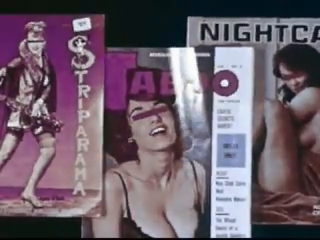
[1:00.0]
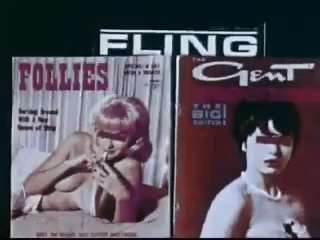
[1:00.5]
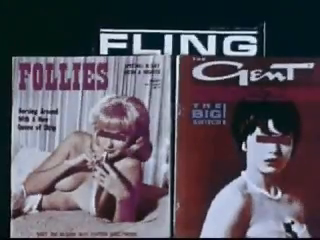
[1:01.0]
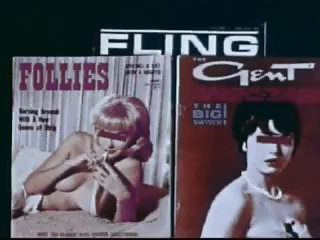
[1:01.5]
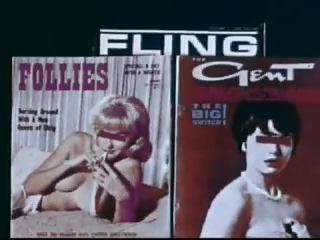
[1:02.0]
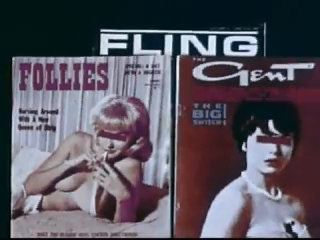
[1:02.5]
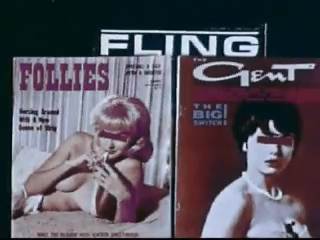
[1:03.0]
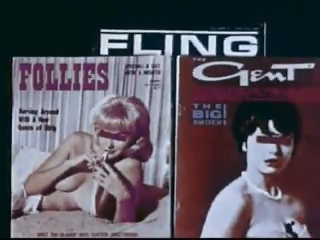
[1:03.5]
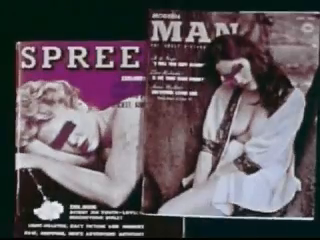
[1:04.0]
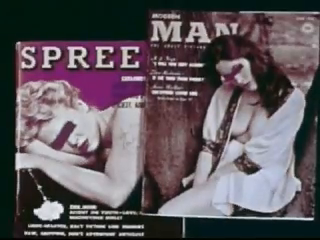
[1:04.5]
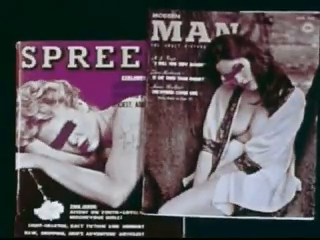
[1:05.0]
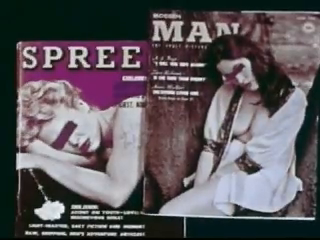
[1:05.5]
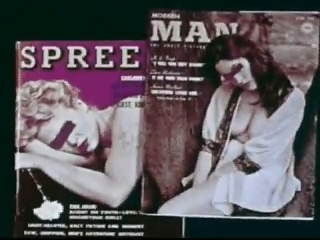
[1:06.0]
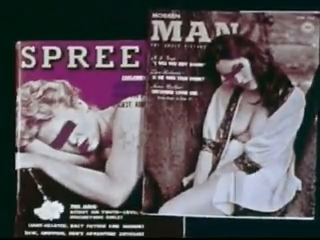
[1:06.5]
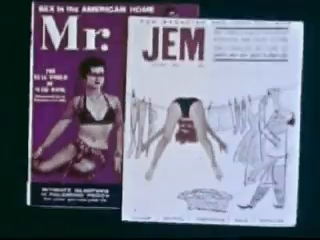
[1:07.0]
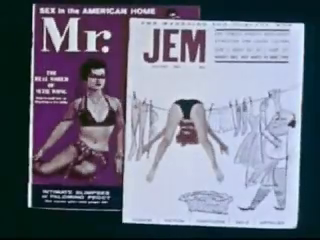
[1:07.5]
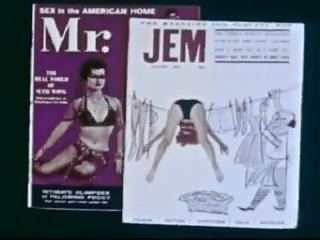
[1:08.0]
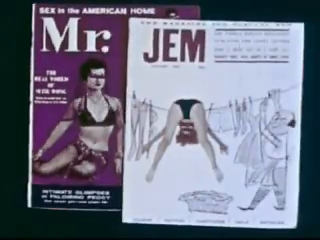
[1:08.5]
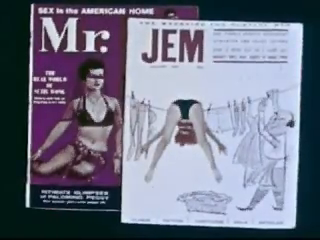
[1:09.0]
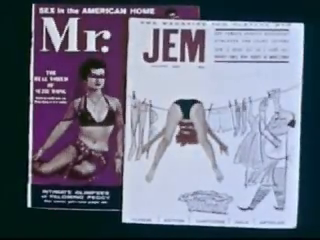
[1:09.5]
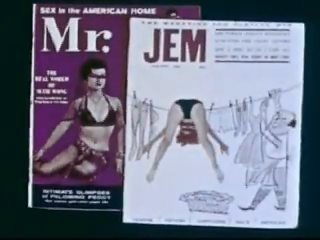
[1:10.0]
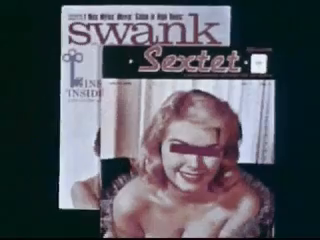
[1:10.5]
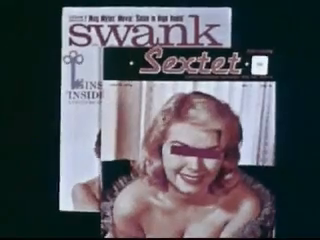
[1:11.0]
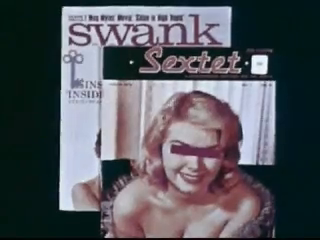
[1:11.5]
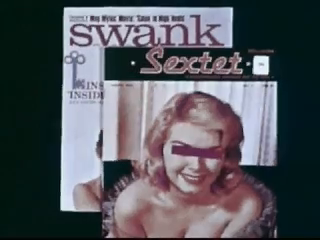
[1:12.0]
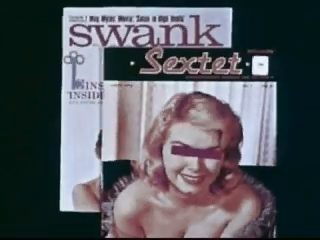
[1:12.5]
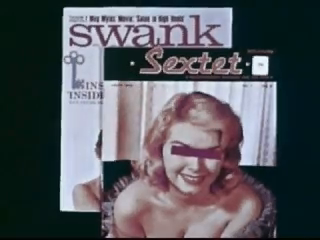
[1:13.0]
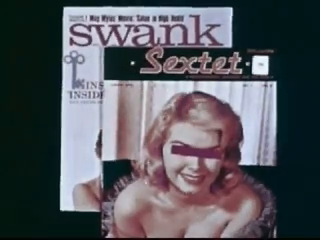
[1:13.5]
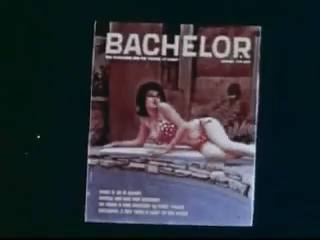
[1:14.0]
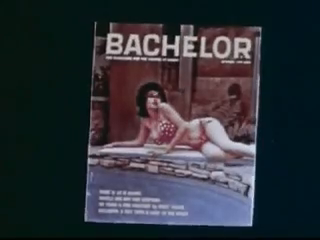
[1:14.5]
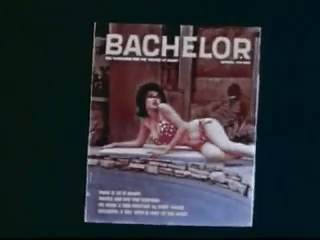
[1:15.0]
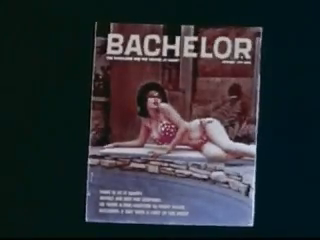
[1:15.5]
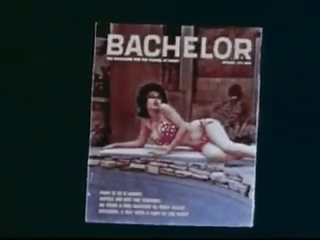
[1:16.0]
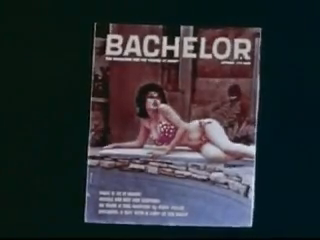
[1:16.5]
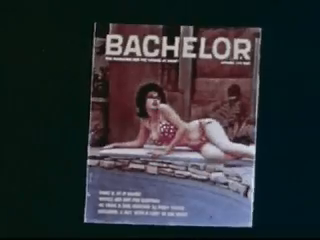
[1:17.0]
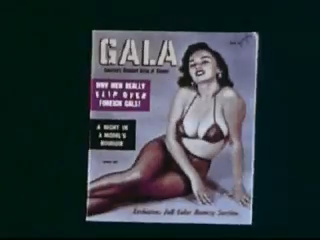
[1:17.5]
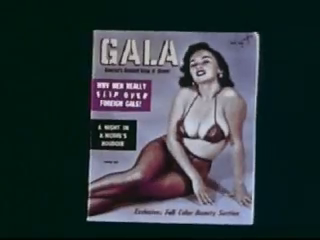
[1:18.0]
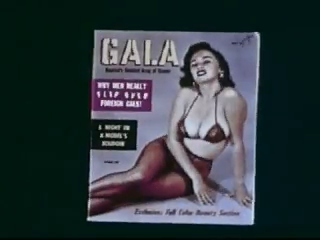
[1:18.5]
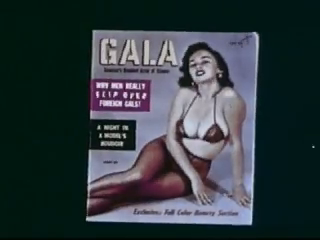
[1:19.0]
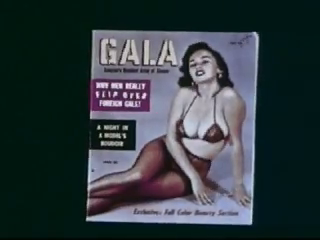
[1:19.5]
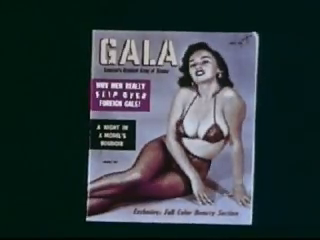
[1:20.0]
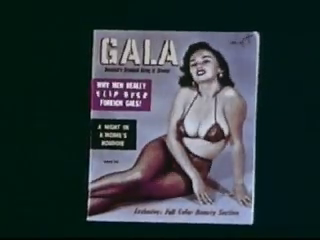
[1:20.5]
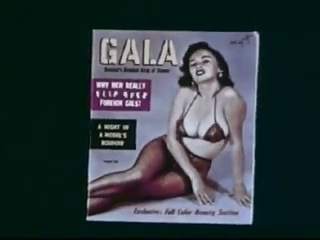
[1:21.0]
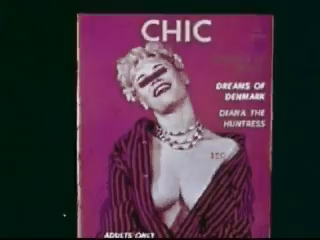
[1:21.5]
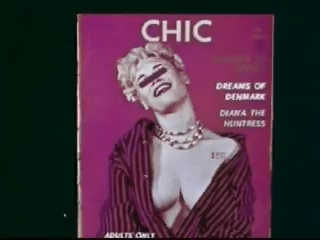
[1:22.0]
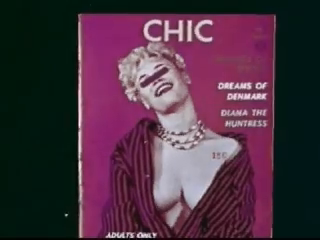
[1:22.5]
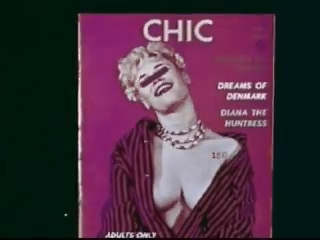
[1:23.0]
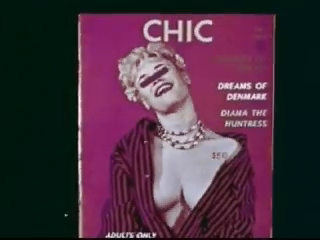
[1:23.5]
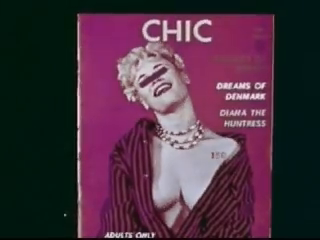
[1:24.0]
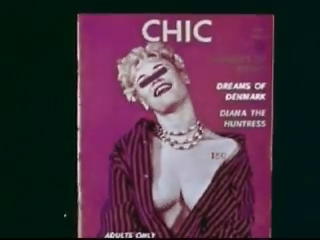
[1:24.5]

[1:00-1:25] More magazine covers of women follow. The next titles are "Follies", "Fling" and "Gent", showing women with little or no clothing and their eyes still boxed out. Next are "Spree" and "Man", where the women wear a little clothing; some are blonde and some dark-haired, posing. The next magazine is "Mister", with "Gem" next to it. The "Gem" cover shows a clothesline of hanging clothes and a woman looking down, her butt facing the viewer, looking between her legs; it looks more animated than a real picture. The "Mister" cover shows a woman wearing little clothing looking at the viewer. Next are "Swank" and "Sextet": the pictures on "Swank" cannot be seen, while "Sextet" has a woman looking at the viewer with her eyes squared out. Then comes "Bachelor", with a woman lying down in a bathing suit, kind of looking at the viewer and posing. Next is "Gala", with a woman wearing very little but covered up. The last one is called "Chick"; it says "dreams of Denmark", so the woman is possibly Danish. She wears a button-down shirt that is partly unbuttoned, with most of her breast exposed except the tip, and her eyes are covered by a rectangular block.